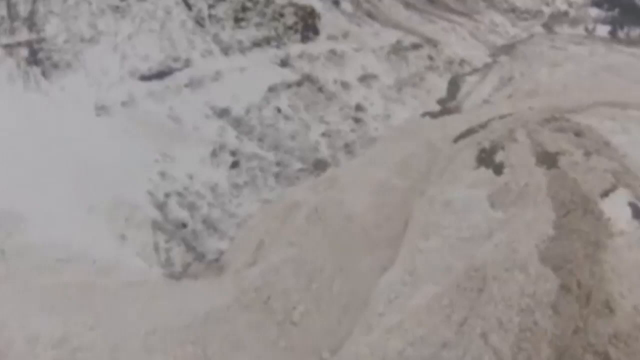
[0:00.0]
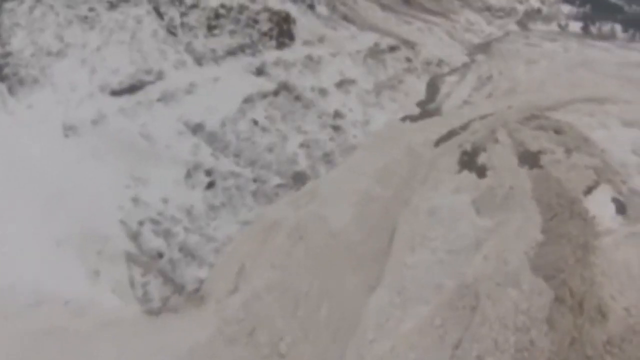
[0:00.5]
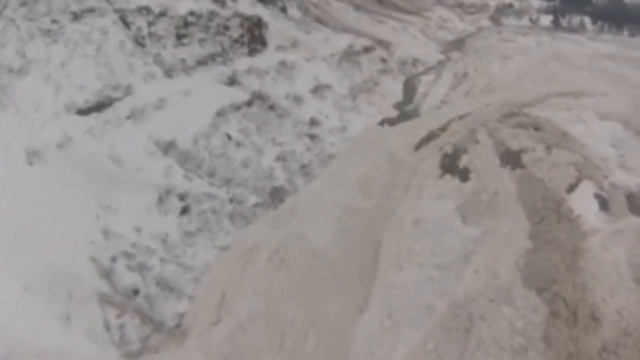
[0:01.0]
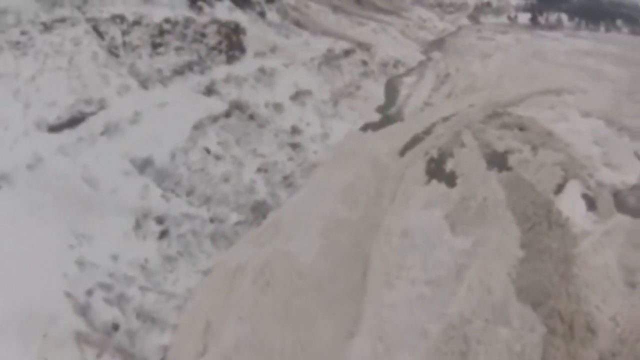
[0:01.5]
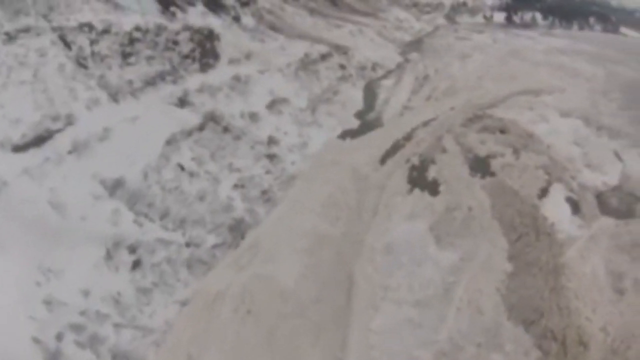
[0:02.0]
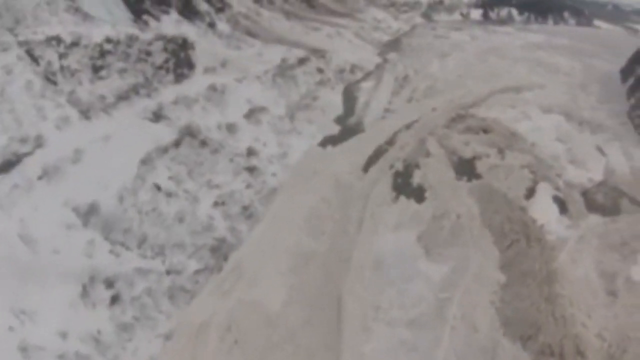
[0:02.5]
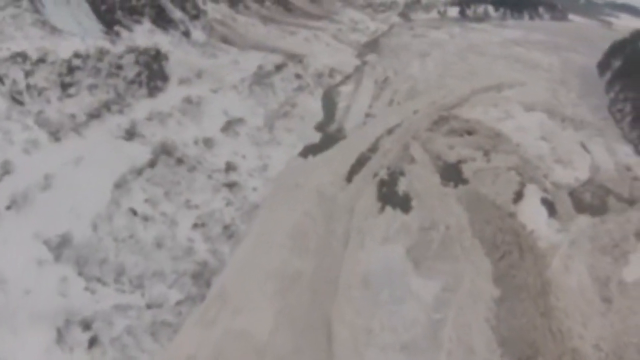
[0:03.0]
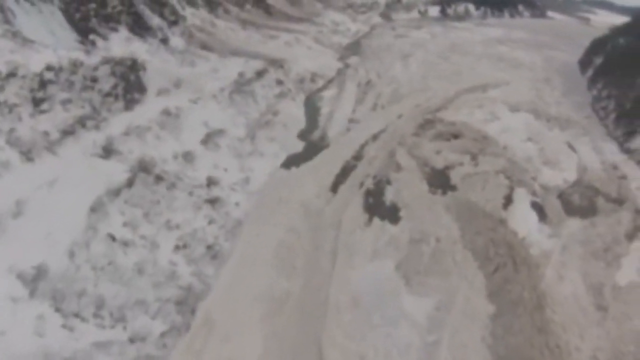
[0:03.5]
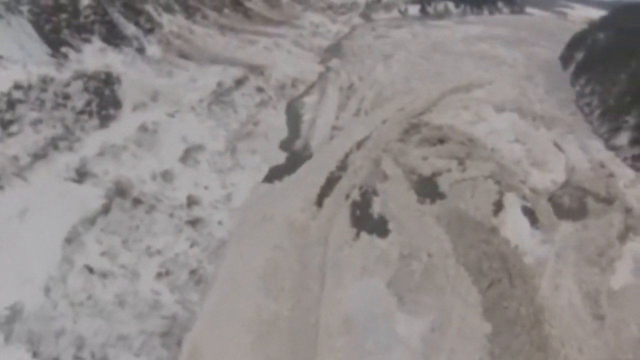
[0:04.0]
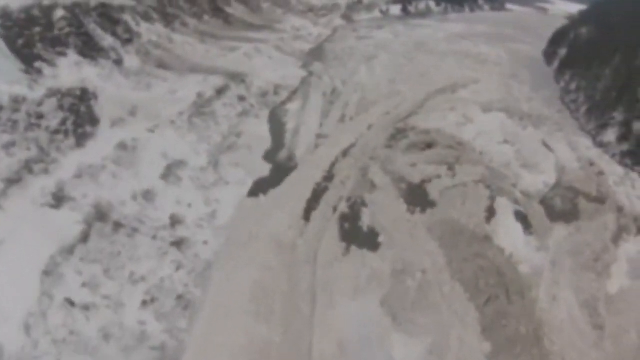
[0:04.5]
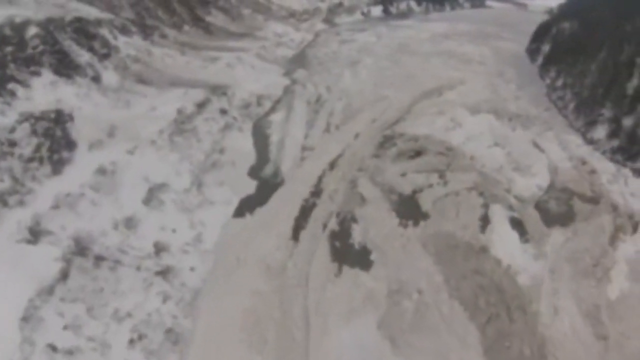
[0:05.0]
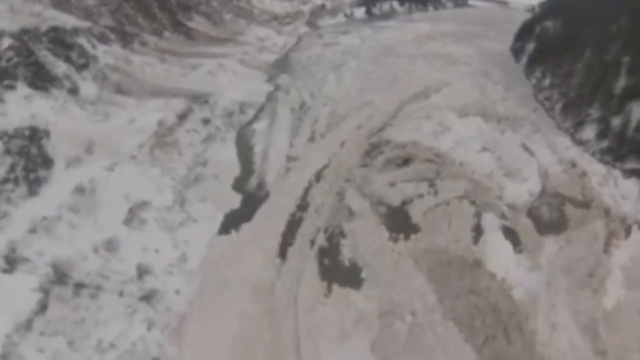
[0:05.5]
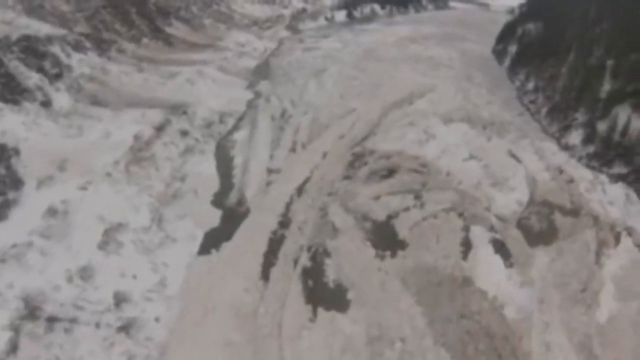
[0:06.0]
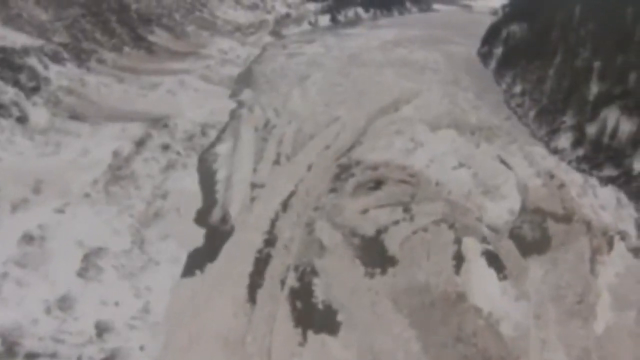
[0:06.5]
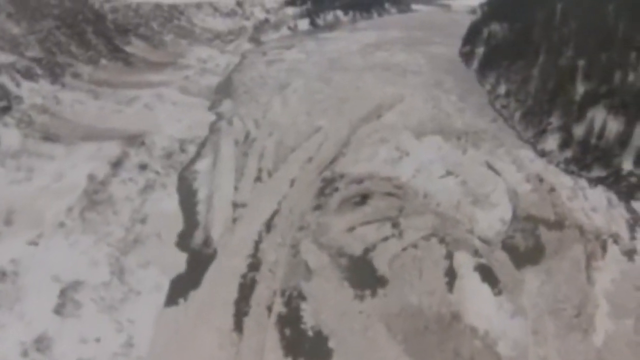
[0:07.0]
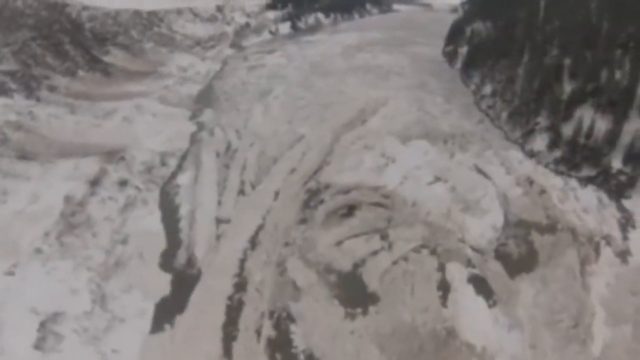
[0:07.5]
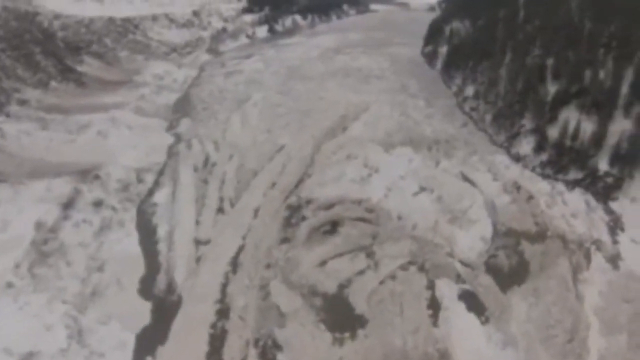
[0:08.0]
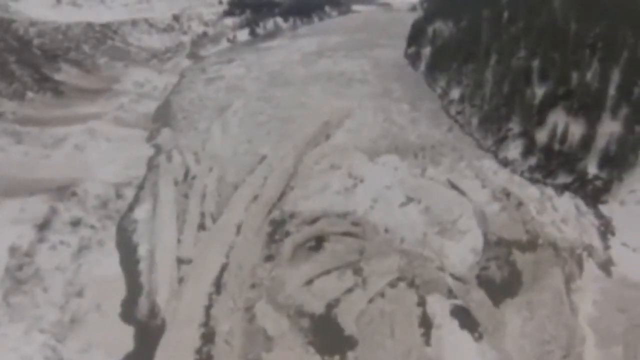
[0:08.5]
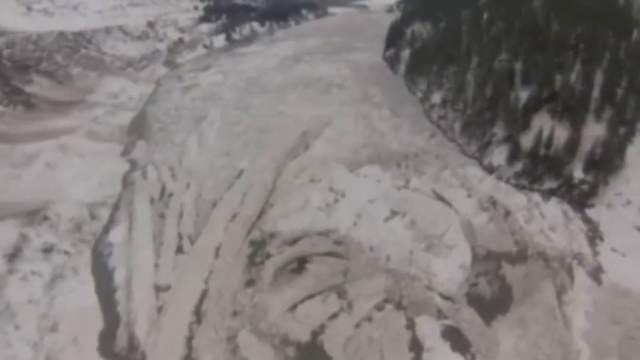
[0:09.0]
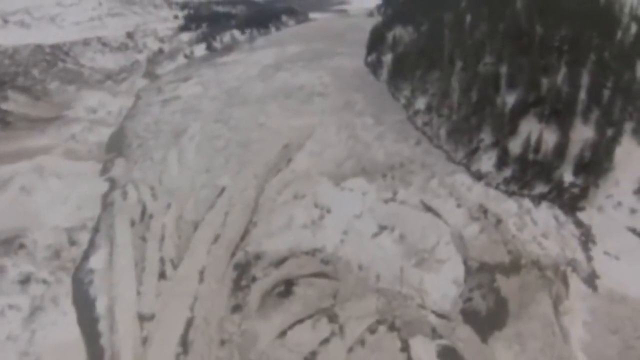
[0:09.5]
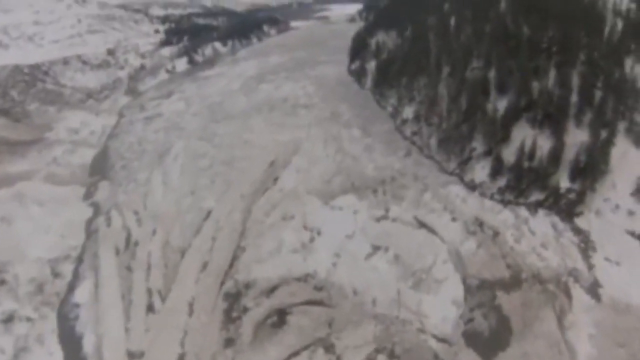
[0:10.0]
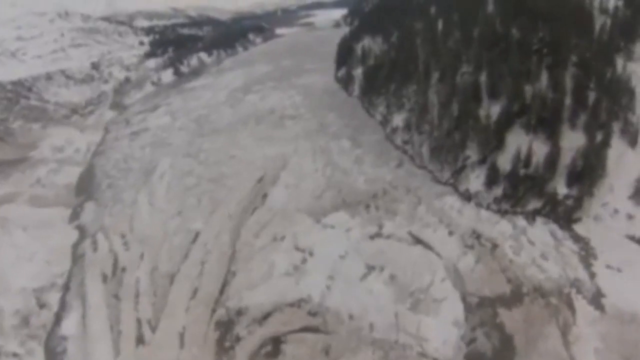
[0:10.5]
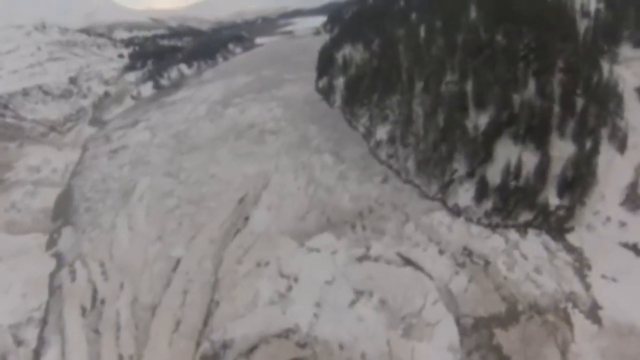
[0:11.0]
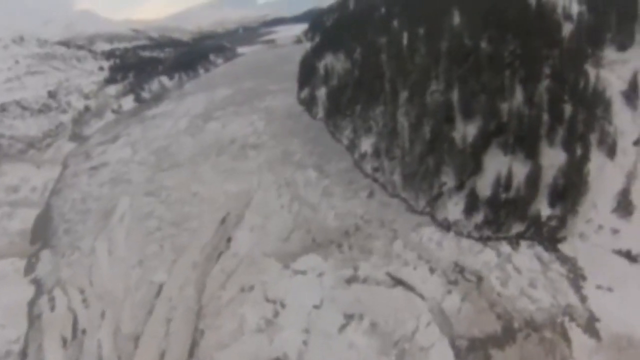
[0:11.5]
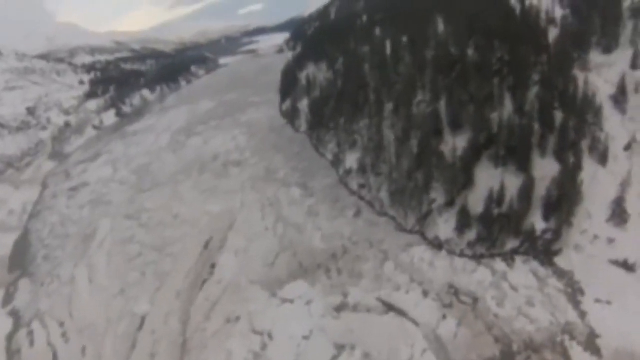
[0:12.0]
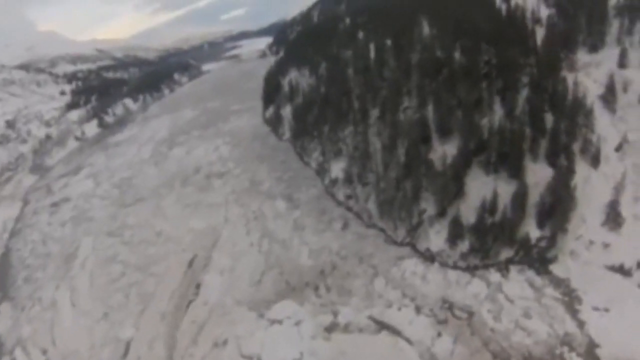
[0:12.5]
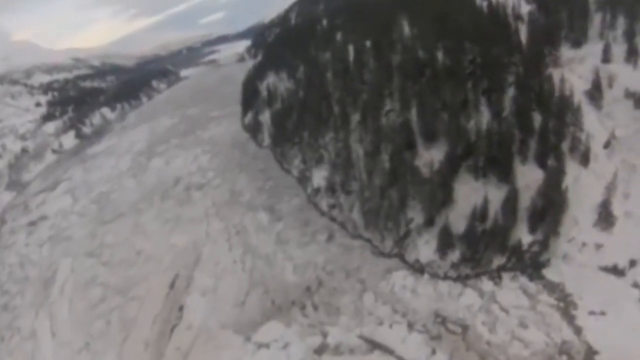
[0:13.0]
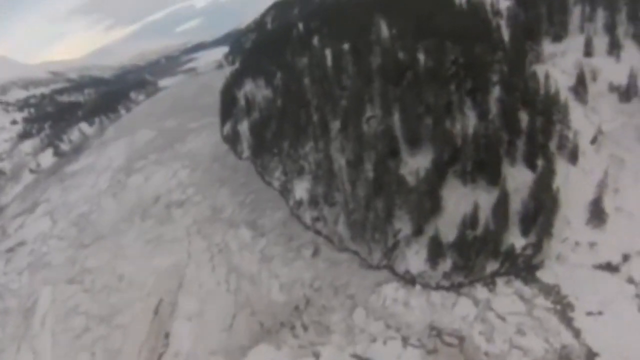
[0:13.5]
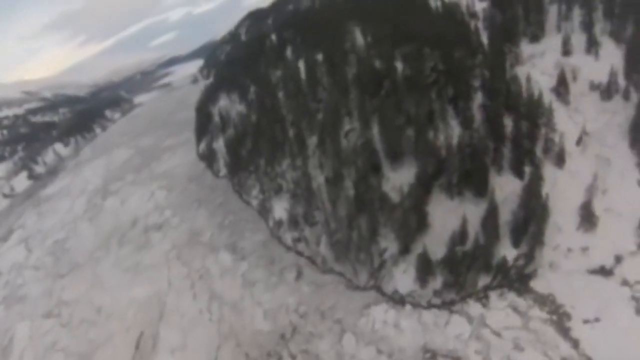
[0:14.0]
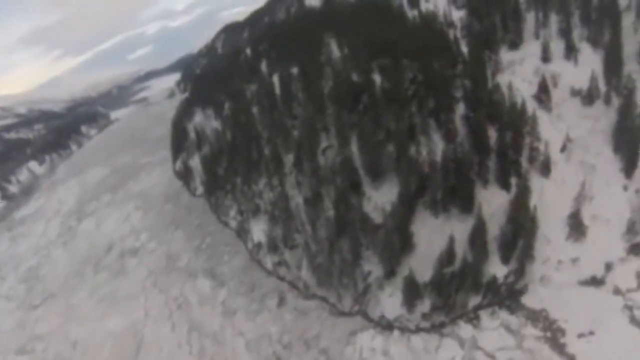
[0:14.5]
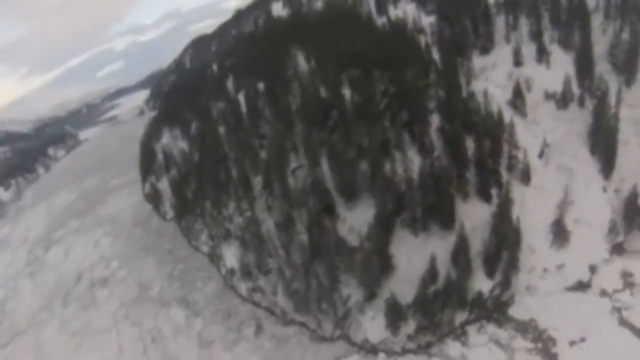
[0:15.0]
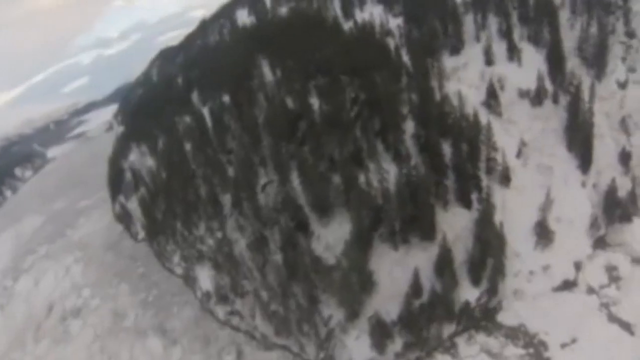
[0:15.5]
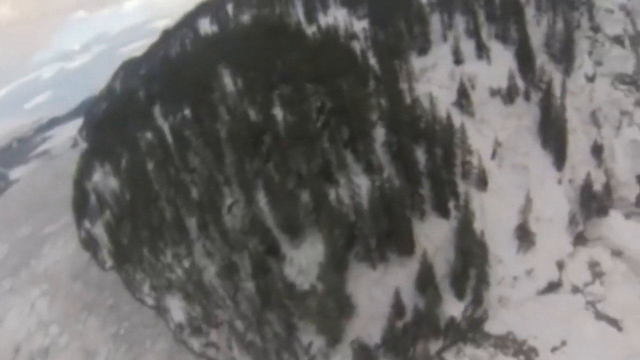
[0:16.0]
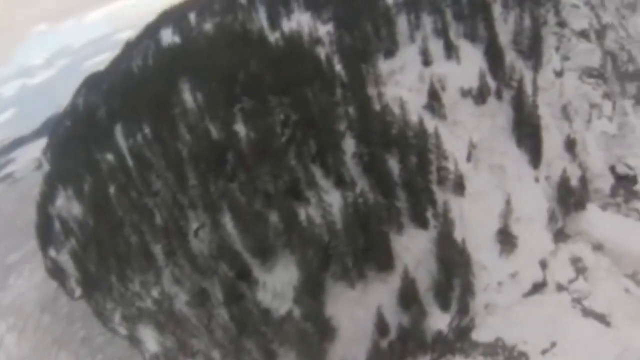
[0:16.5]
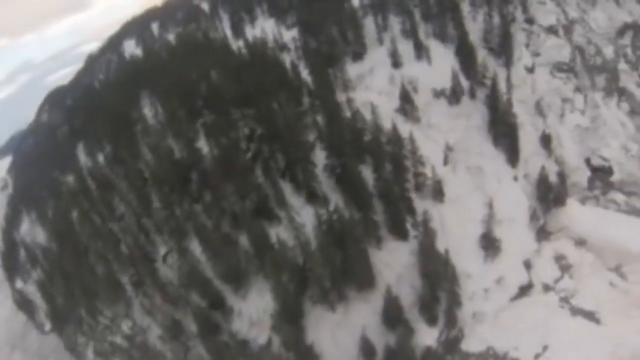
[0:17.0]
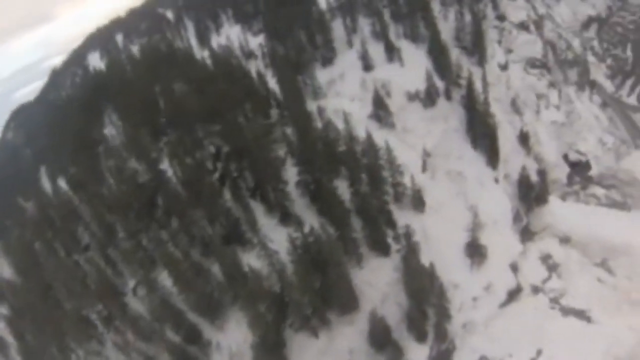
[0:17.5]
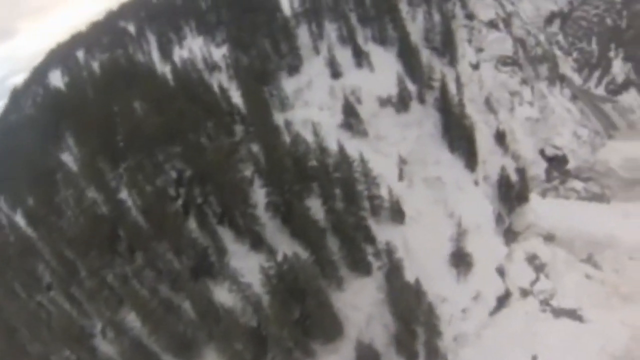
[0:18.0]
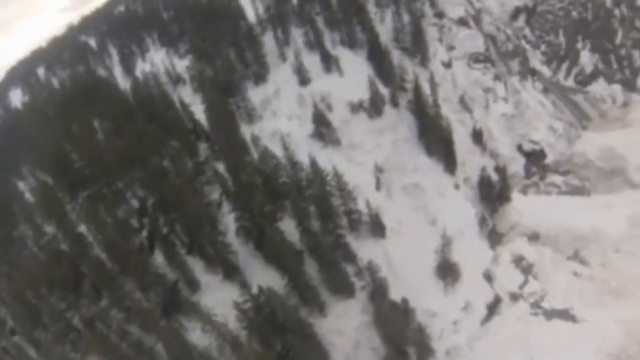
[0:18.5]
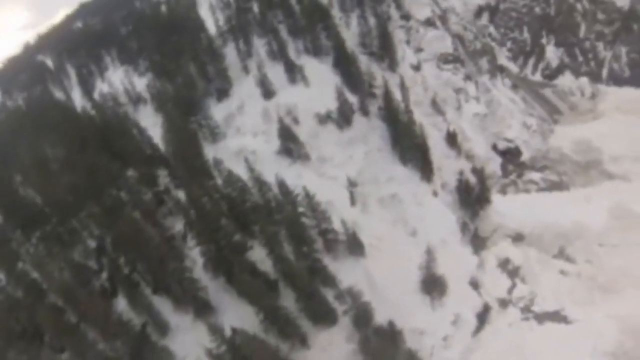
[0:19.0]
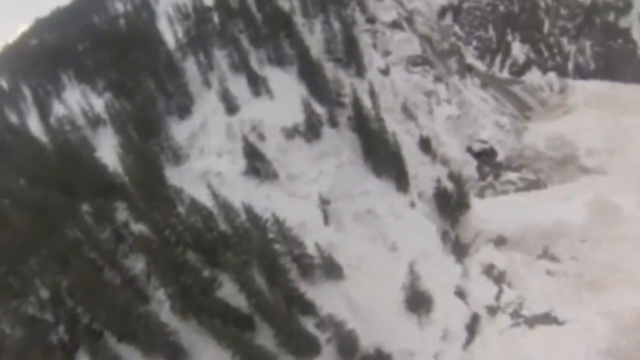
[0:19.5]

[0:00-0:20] The camera views the landscape from far above the ground, though close enough to pick up some details, moving slowly in a circular path. The area has slight trees and is completely covered with snow in some parts, while a few trees keep their dark green color. The sharp edges of the mountain are also covered with snow, which varies between pure white and pale white. A more snow-filled pathway separates the trees from the mountains; from the camera's angle, the mountains appear to be in equal proportion, level with the trees and the snowy pathway. The trees appear packed. The view seems blurry and the scene is dimly lit.